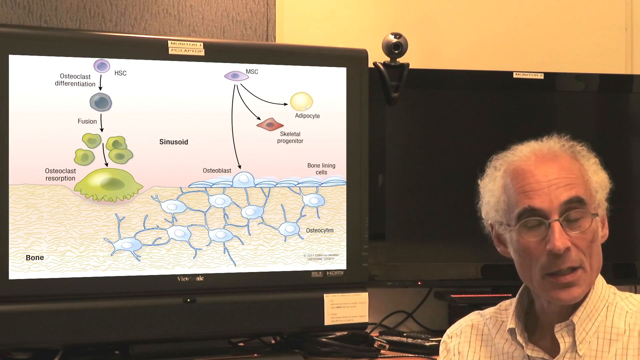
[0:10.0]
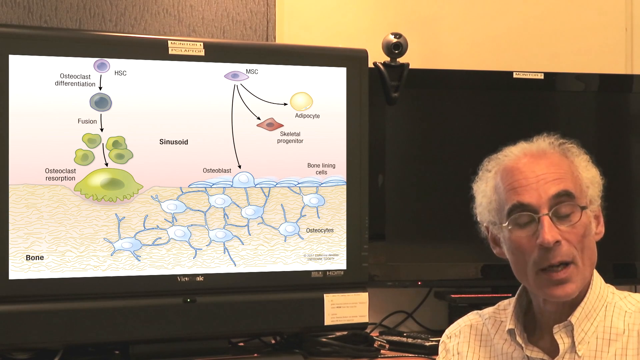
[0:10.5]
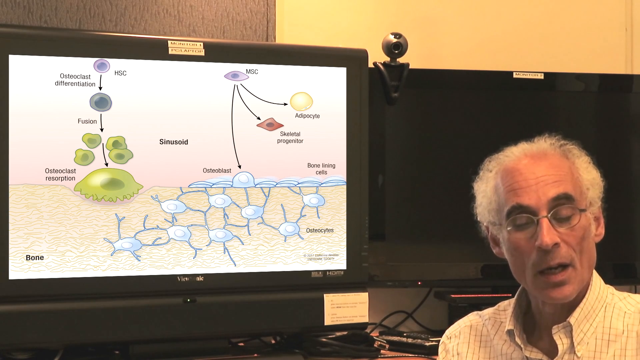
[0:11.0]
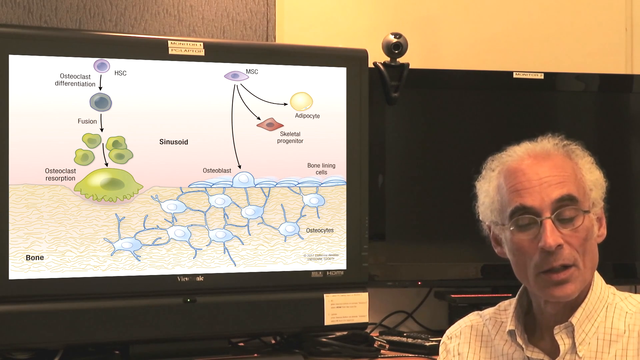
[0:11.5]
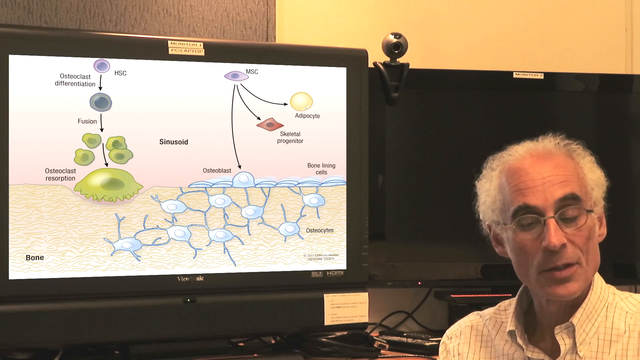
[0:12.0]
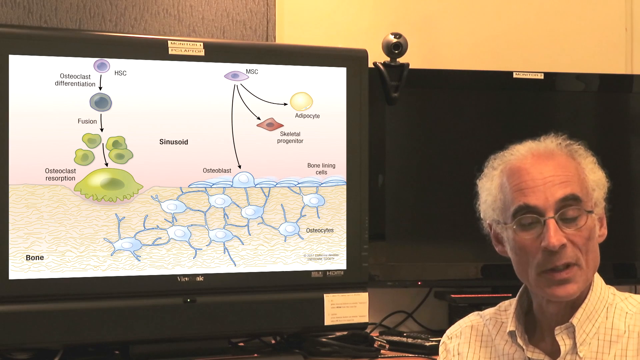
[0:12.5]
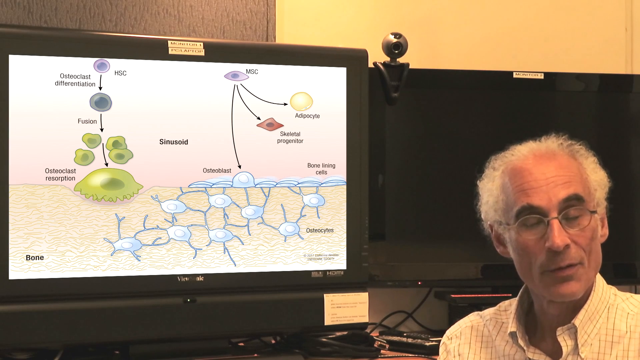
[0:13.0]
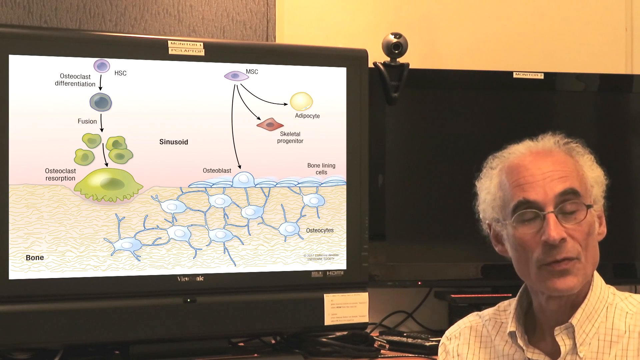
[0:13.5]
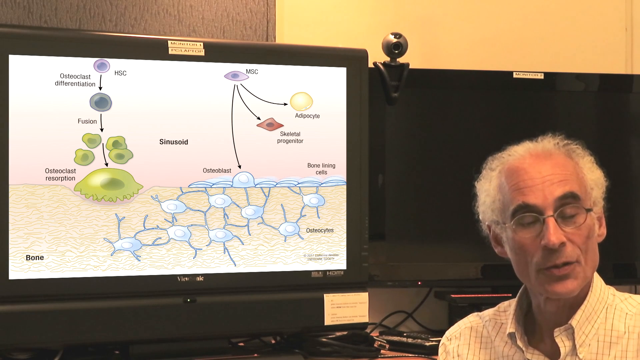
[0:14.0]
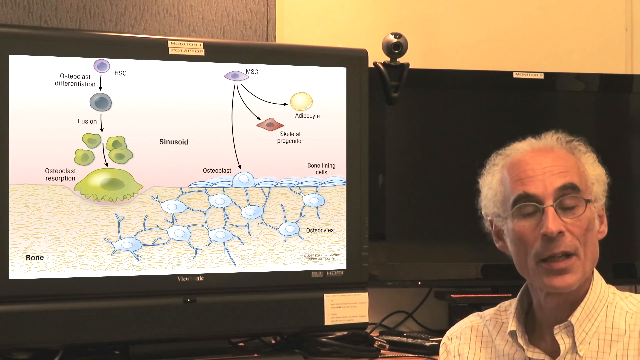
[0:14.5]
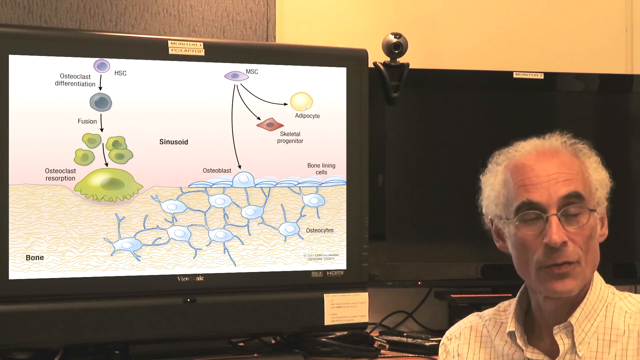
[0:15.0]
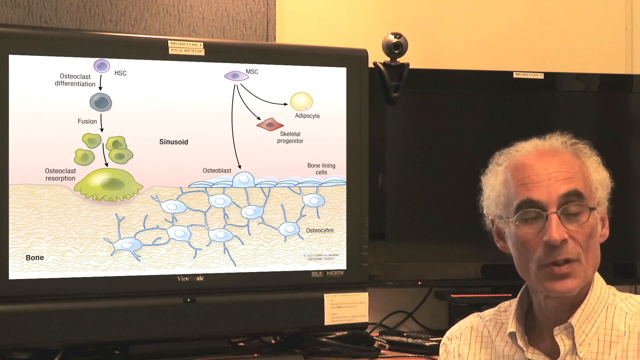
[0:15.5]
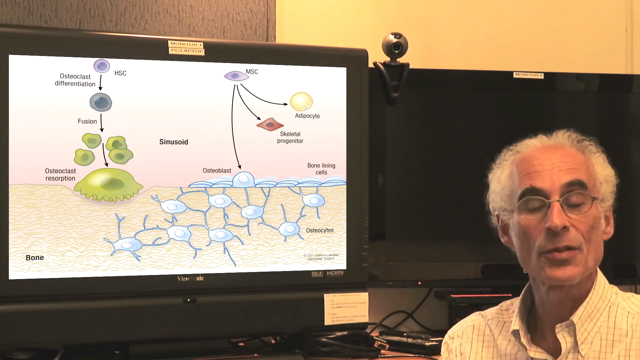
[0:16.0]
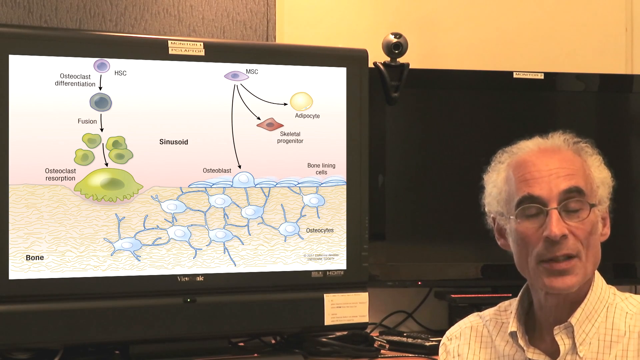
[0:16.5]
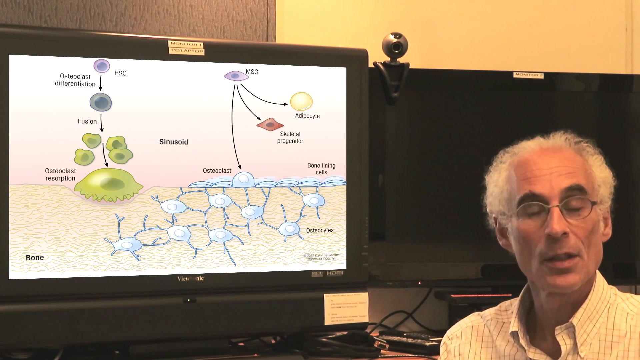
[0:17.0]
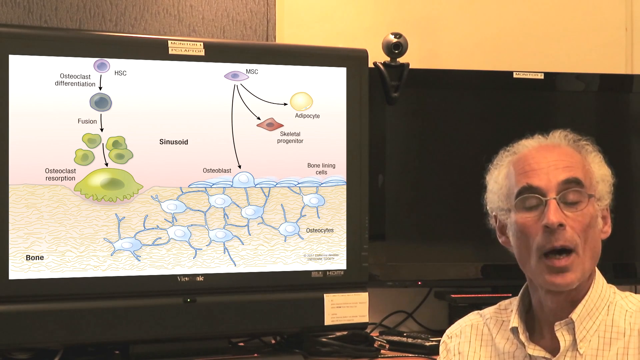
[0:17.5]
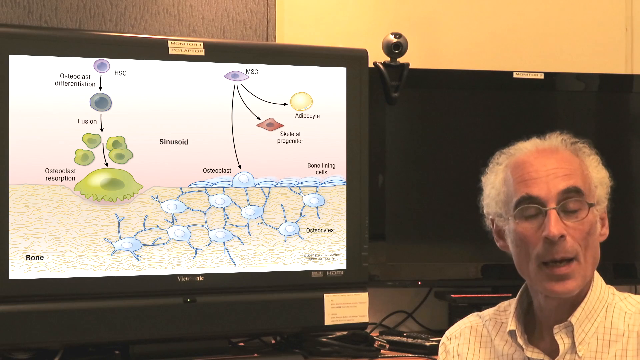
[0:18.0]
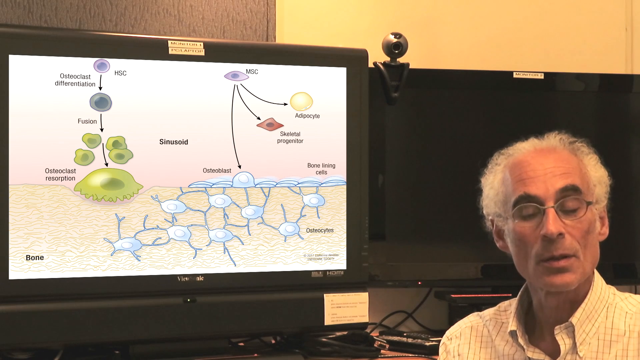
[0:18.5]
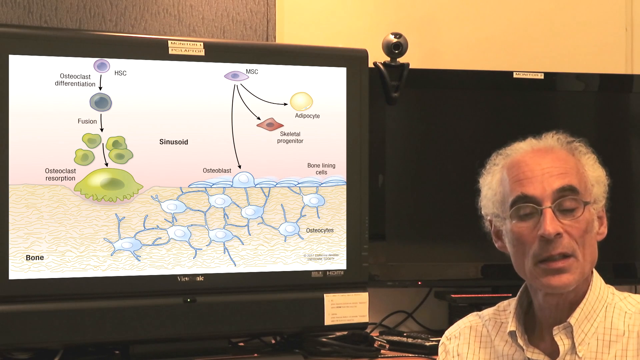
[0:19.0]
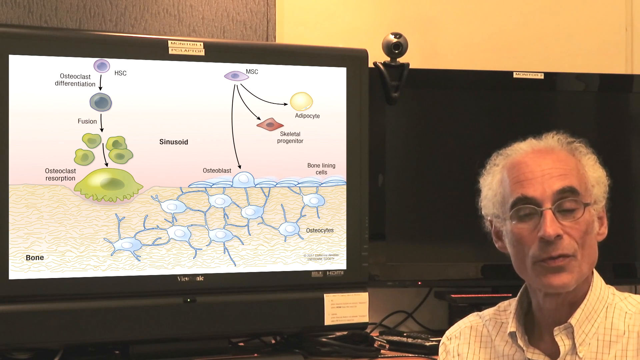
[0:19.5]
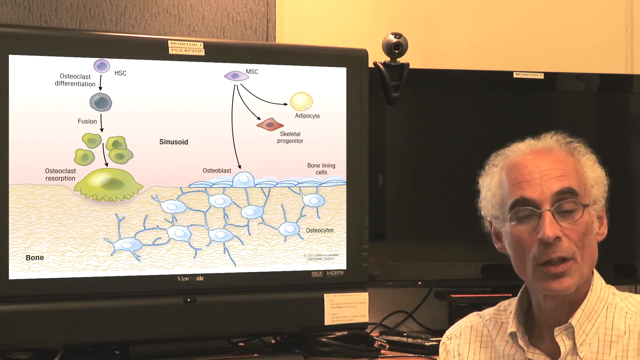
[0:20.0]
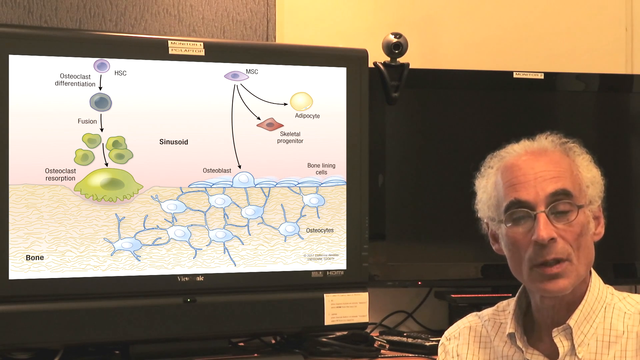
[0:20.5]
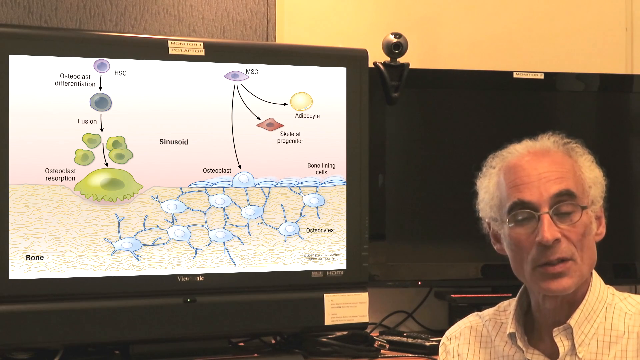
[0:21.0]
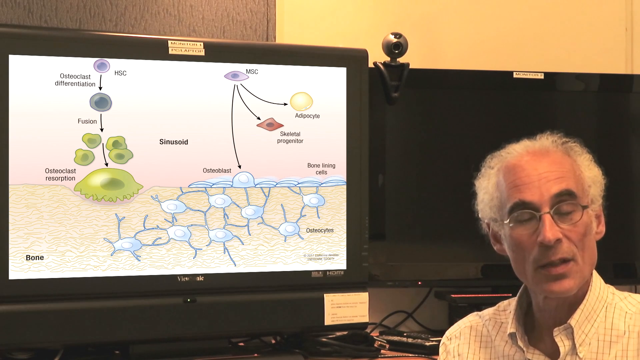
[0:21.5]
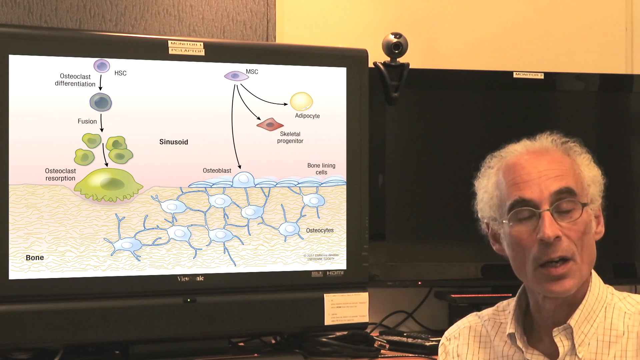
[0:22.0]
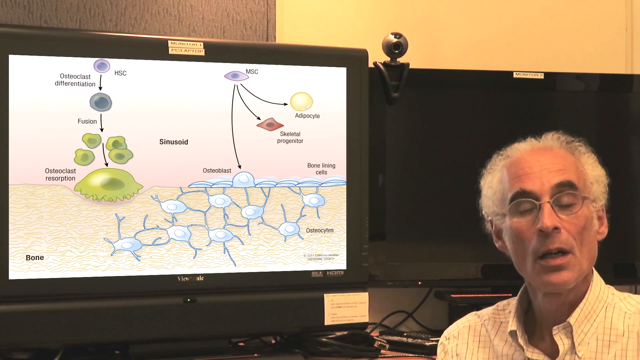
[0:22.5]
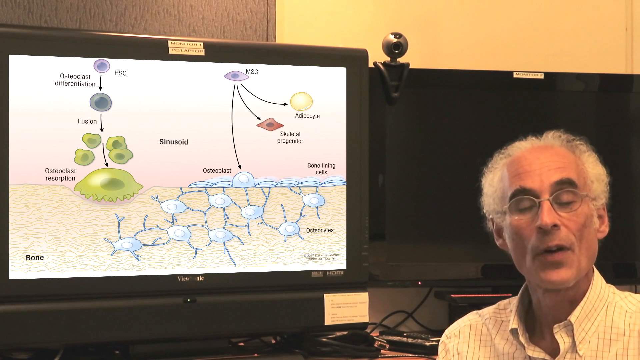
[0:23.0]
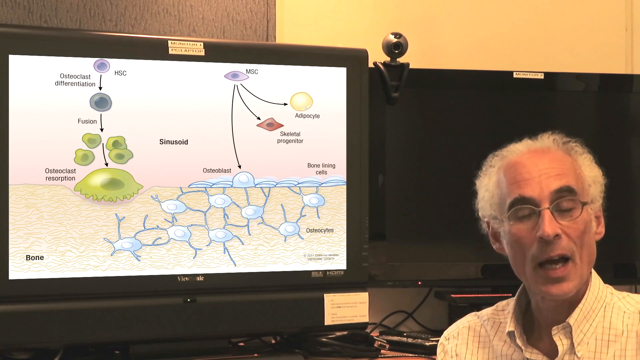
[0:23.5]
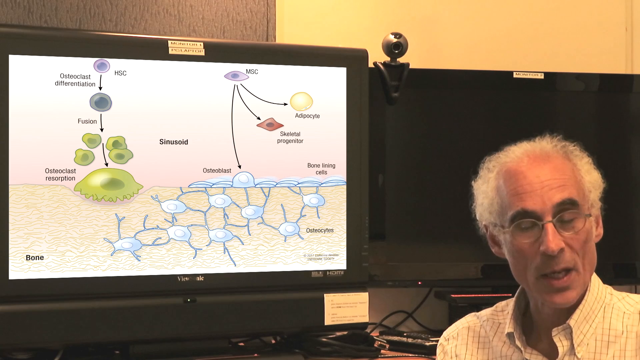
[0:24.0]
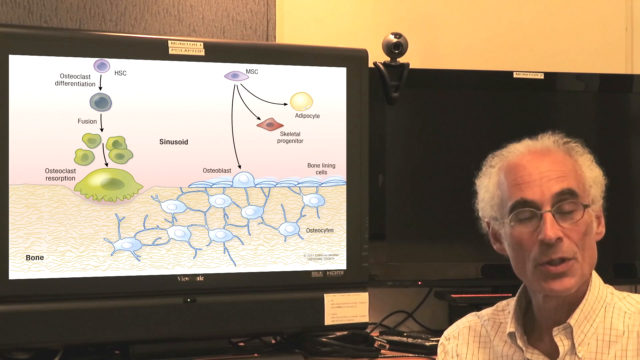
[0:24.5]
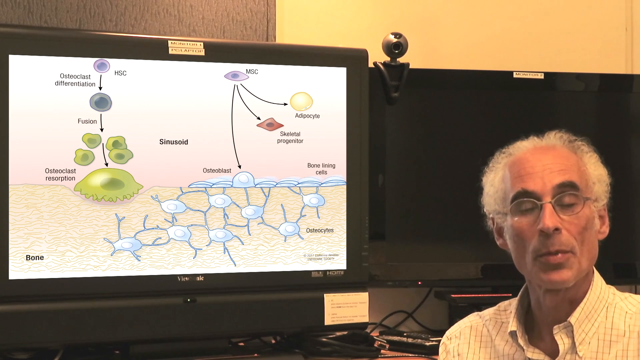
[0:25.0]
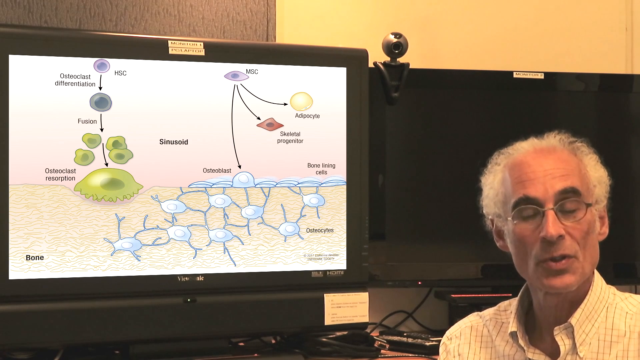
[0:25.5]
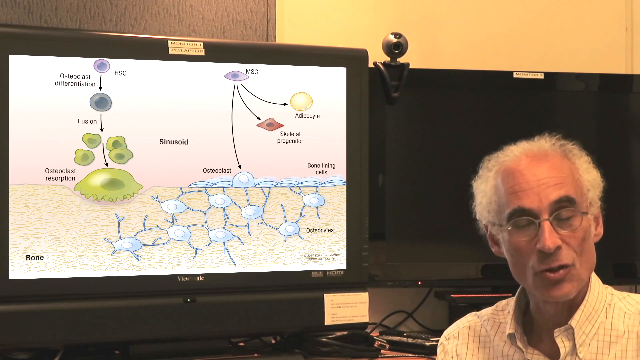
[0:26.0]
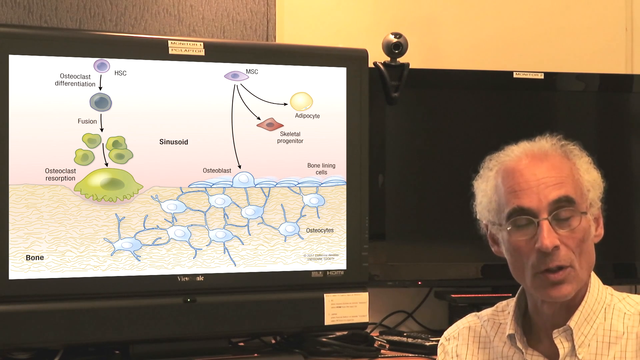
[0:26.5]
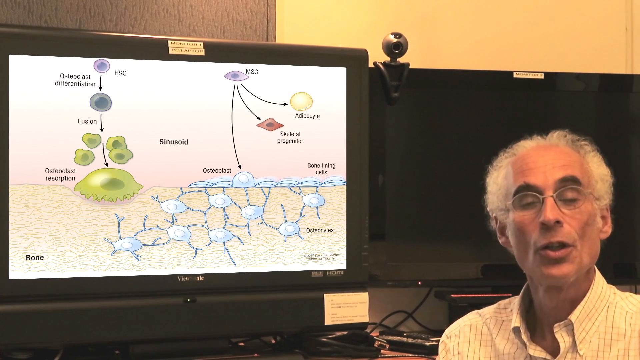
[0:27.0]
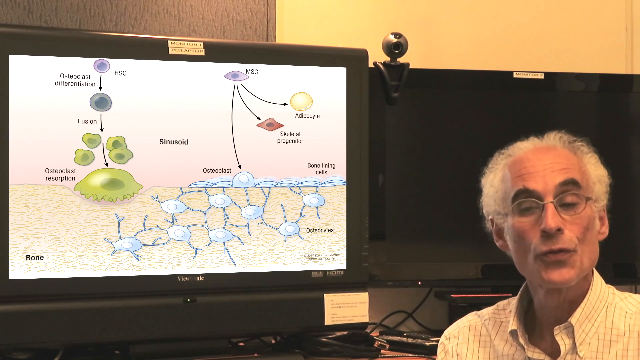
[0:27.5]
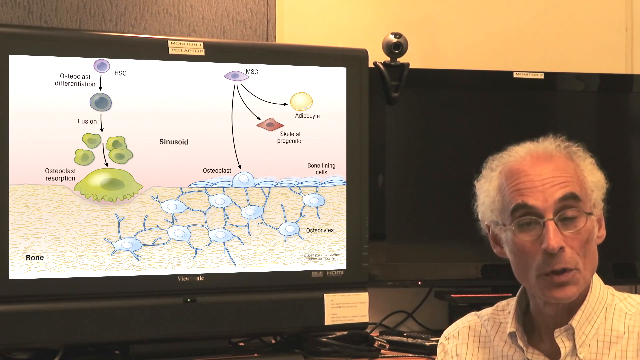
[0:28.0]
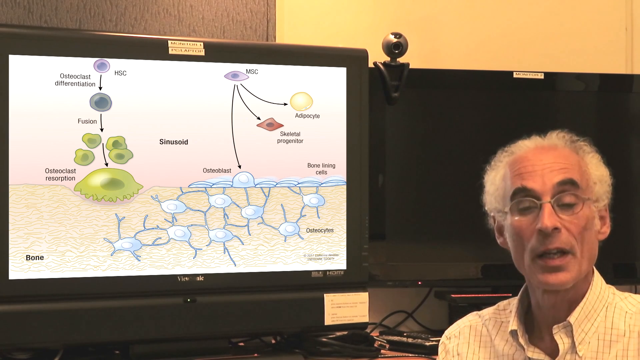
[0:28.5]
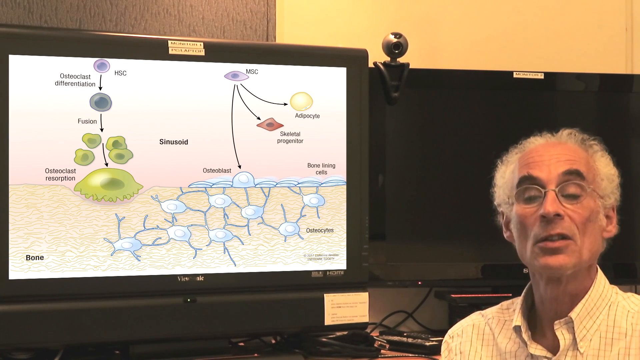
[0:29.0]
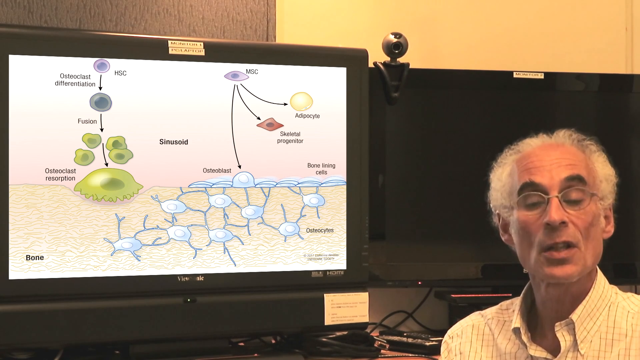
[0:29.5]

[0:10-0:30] A man speaks in the lower right corner of a room with yellow walls that looks like a classroom. A computer monitor to his left shows an illustration in rather muted colors of what appears to be a scientific process occurring in or on human bone. At the top is what looks like a flow chart: it begins with "HSC", a purple circle, going down to a gray circle and "osteoclast differentiation", followed by a "fusion" in which the gray circle turns into four smaller circles, and finally what looks like an oval with little legs, somewhat resembling a clam, called "osteoclast resorption". The bone runs along the bottom of the image, with what look like little spiders in white and blue below it. On the right side of the screen is something that resembles an eyeball; on top of it, three black arrows come from beneath and break off, ending in what looks like an osteoblast touching the bone.